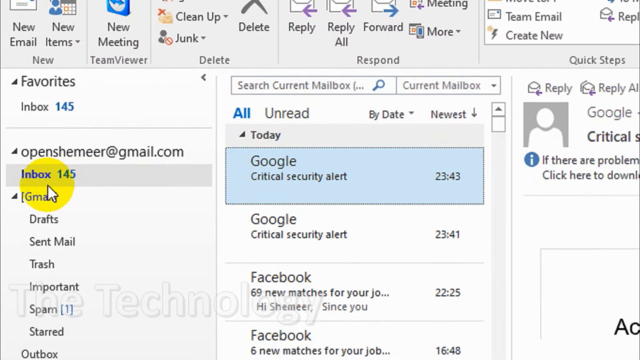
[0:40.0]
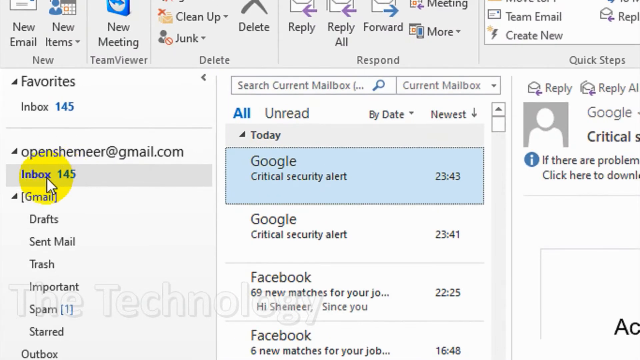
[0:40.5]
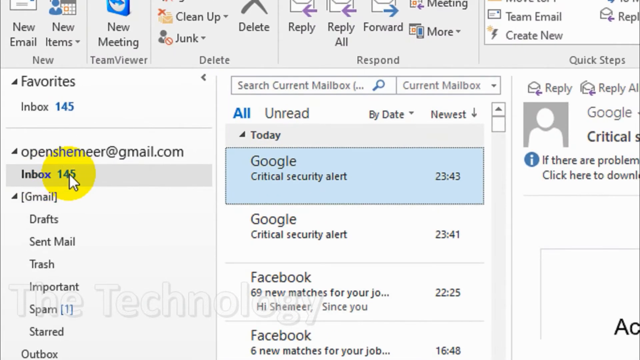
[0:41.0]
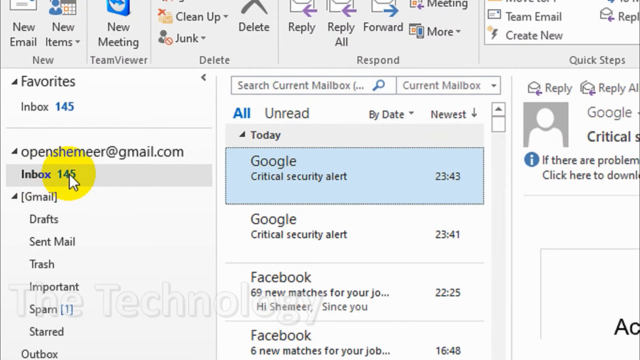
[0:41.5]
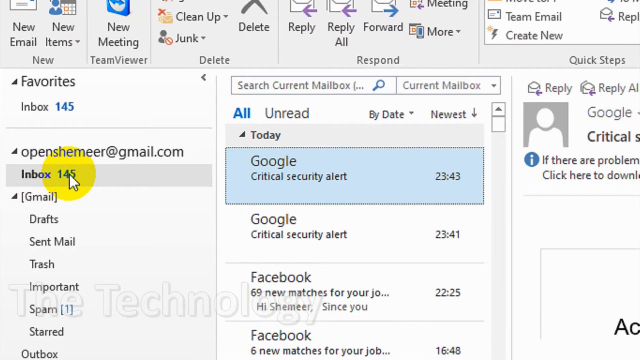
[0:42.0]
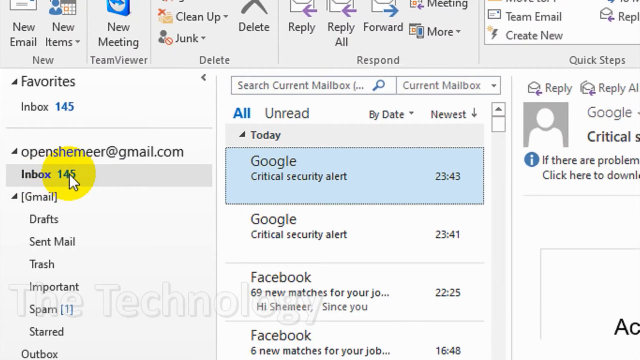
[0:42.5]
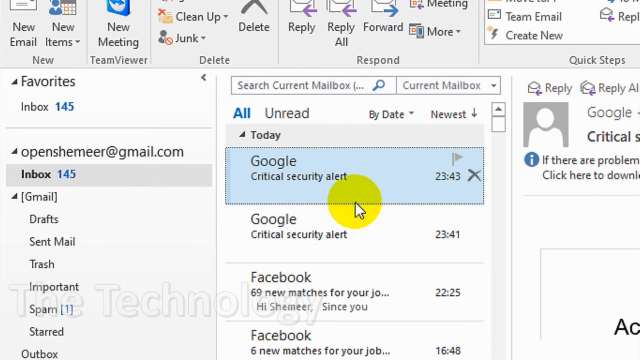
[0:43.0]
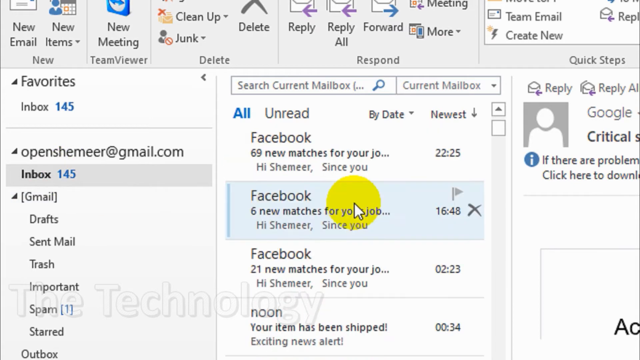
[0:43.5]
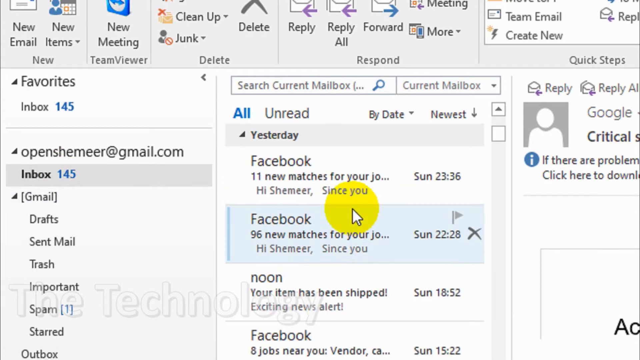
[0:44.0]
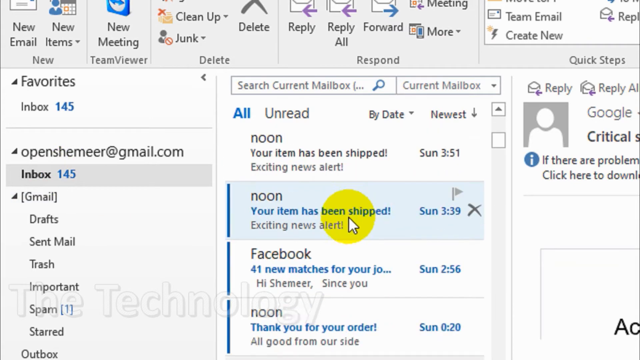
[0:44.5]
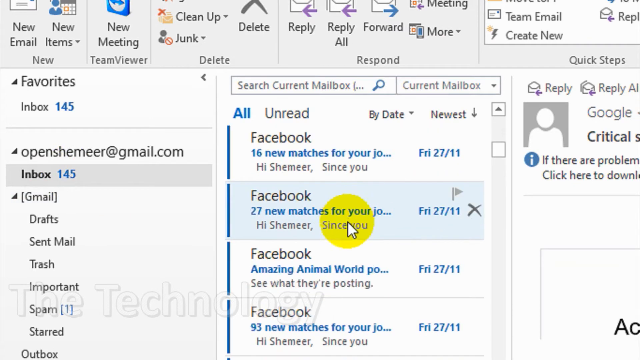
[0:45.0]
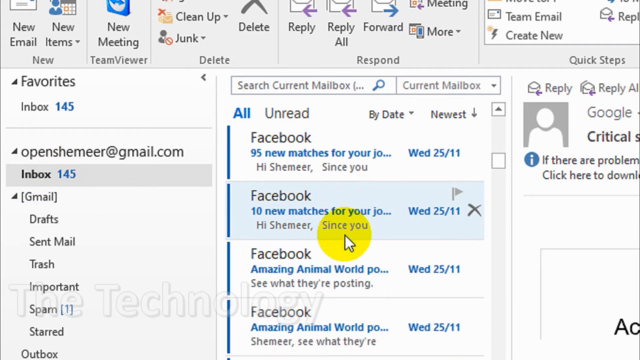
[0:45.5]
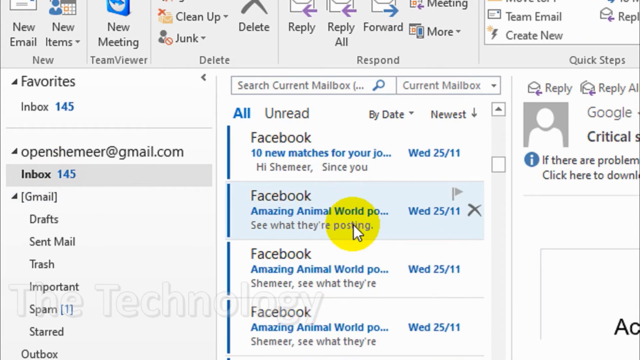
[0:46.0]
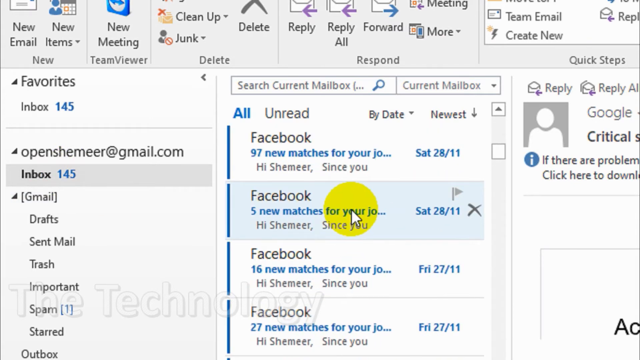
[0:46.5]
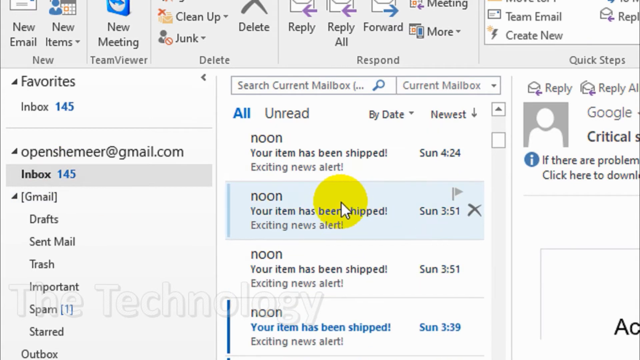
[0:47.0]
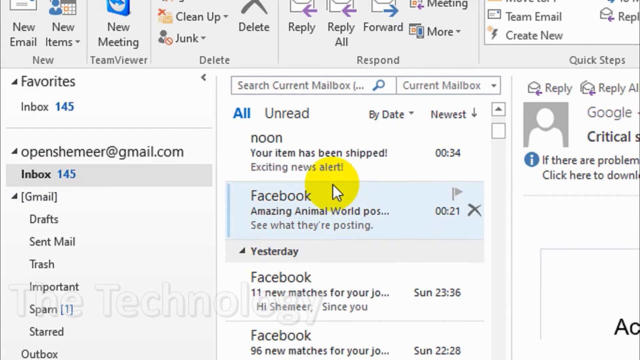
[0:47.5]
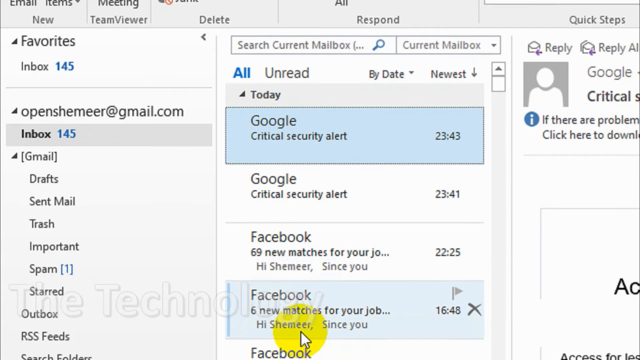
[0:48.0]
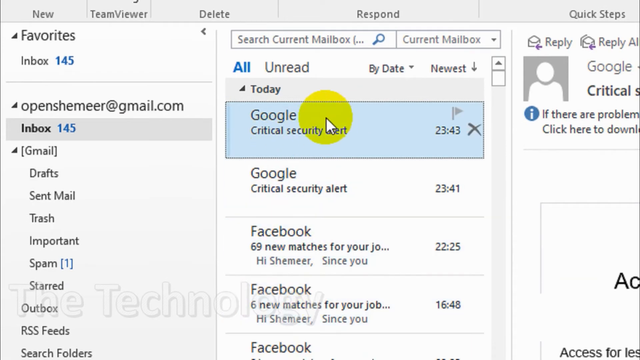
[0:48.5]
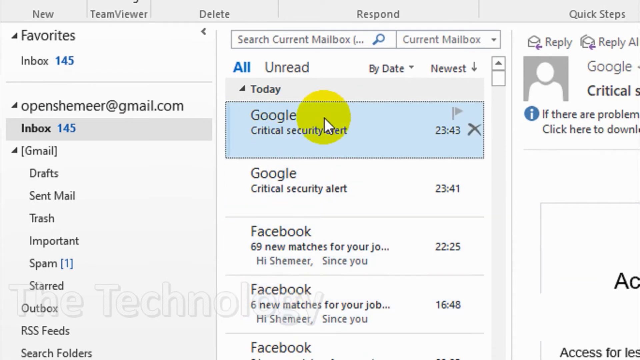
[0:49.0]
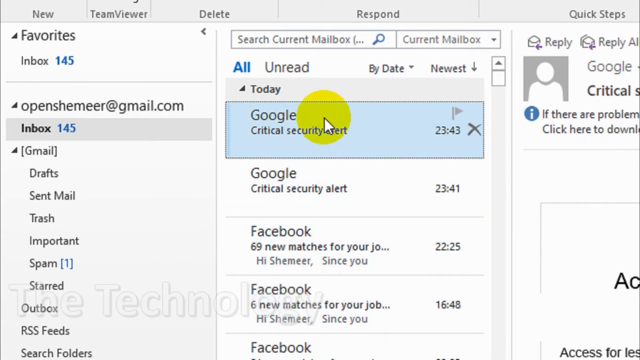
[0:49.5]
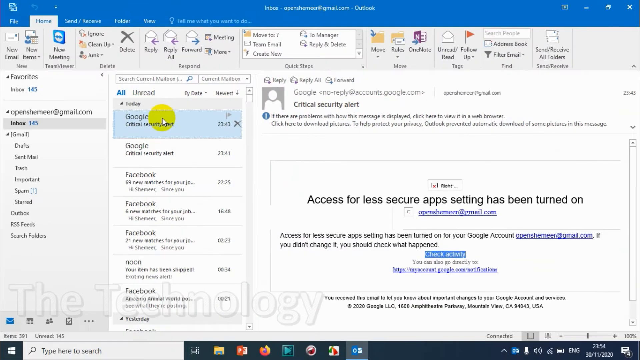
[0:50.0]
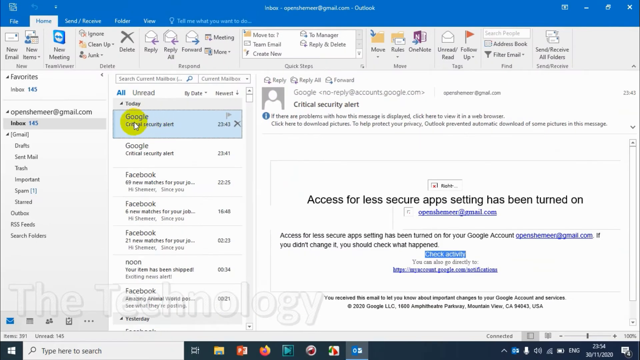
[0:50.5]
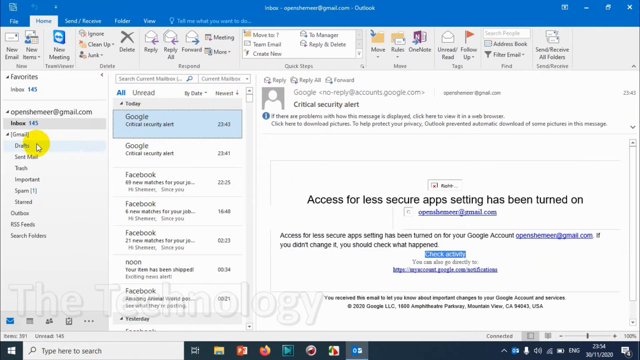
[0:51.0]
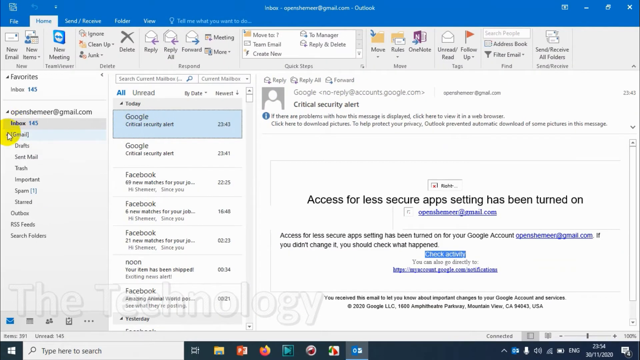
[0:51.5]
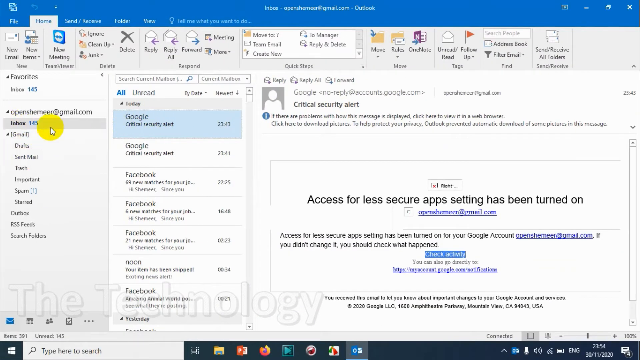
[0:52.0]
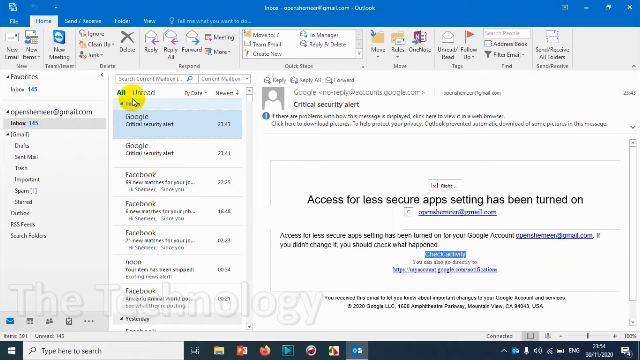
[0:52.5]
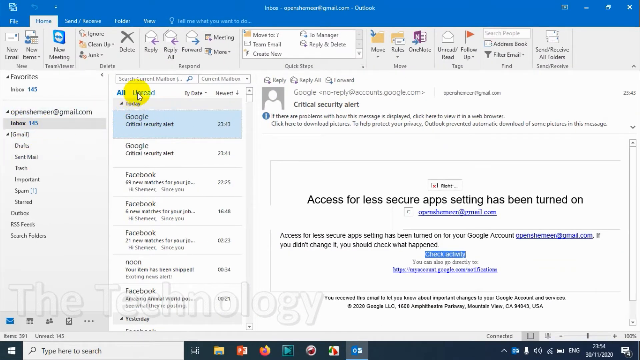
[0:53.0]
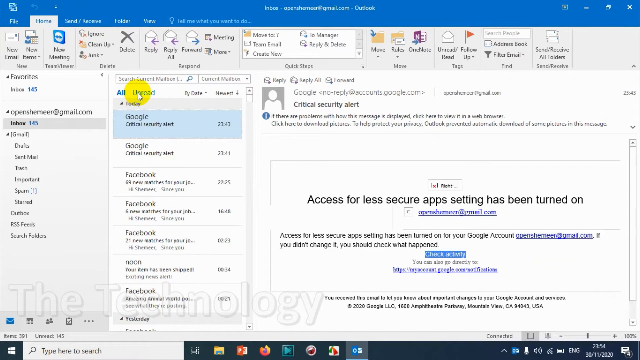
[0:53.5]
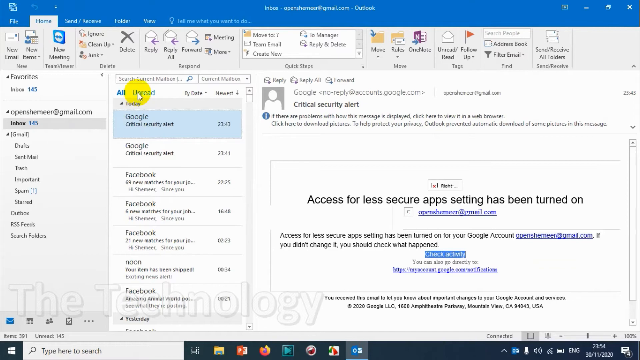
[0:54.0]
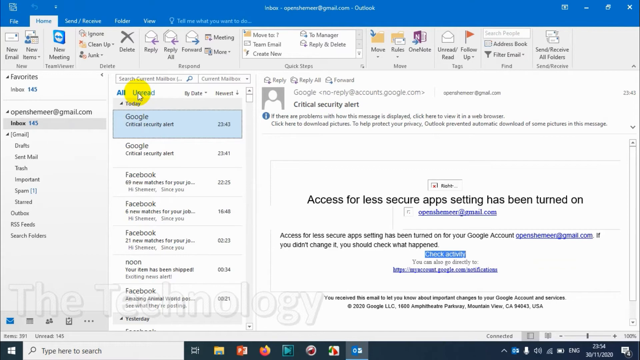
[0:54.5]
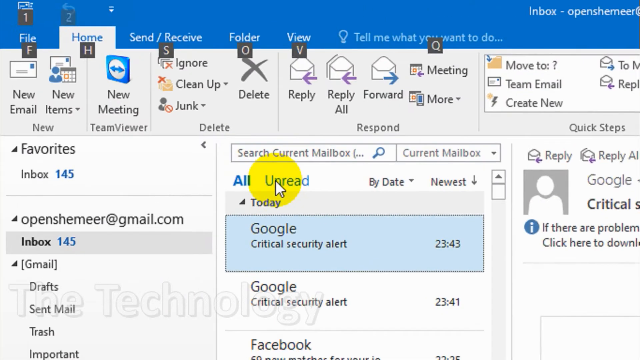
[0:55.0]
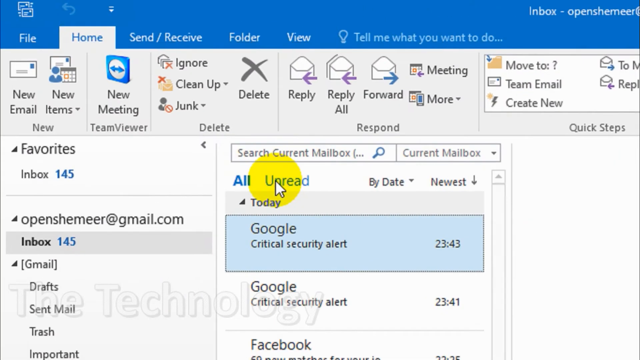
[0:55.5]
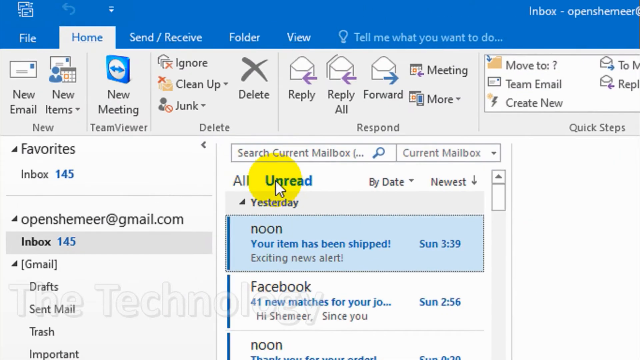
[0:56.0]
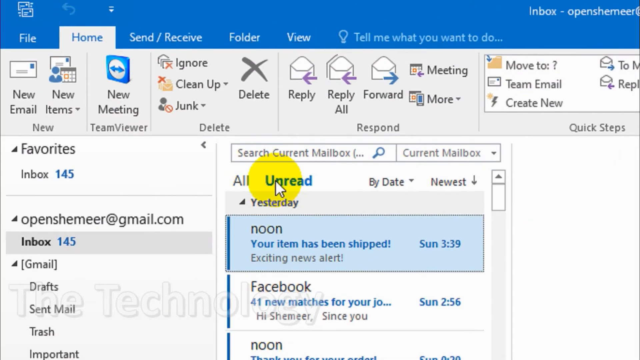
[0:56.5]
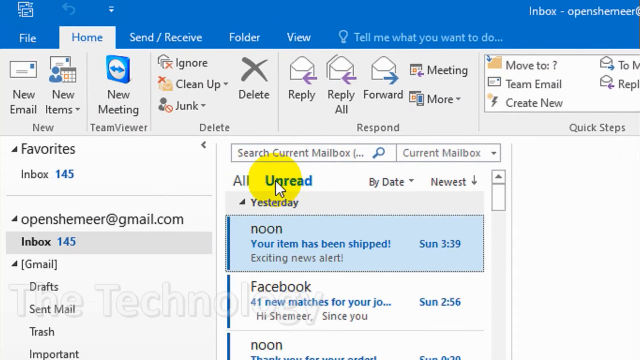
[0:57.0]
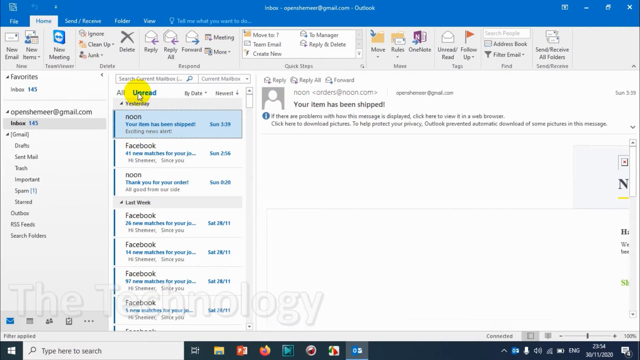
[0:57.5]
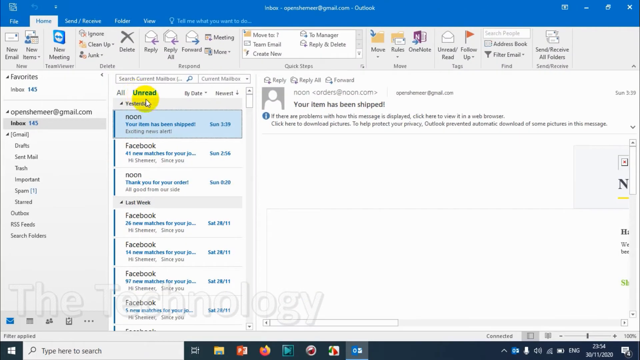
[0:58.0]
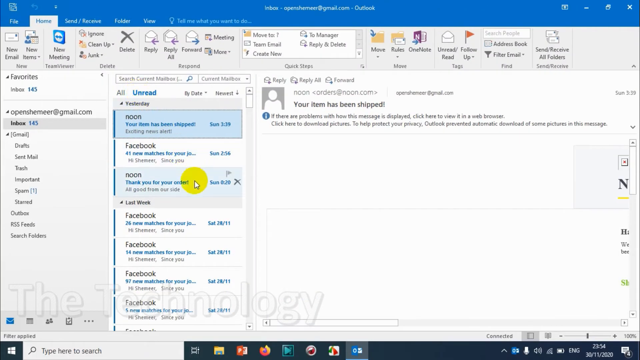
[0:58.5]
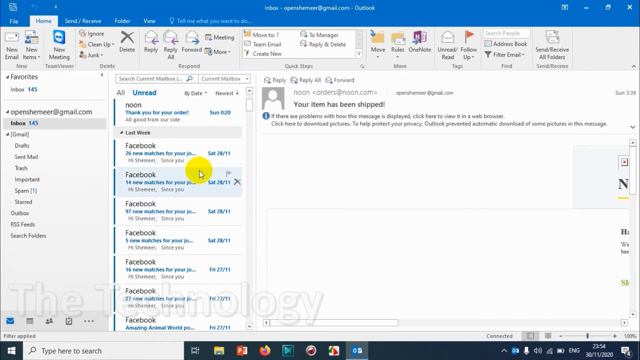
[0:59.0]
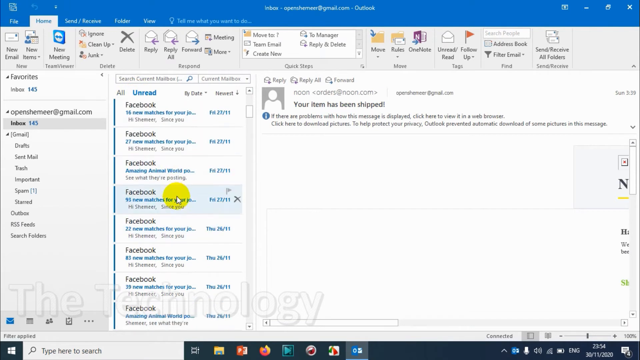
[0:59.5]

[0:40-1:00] A page appears to be an Outlook application landing page. Icons at the top read "New Email," "New Items," "New Meeting," "Clean Up," "Jump," "Delete," "Reply," "Reply All," and "Forward," followed by two smaller icons reading "Meeting" and "More." Something is open that reads "Team Email" and "Create New." Below it, a small section reads "Favorites" with "Inbox." Below that is a Gmail address with the sections "Inbox," "Gmail," "Drafts," "Sent Mail," "Trash," "Important," and "Spam." To the right is what looks like an email account with the emails; the first two read "Google, Critical Security Alert" and the third reads "Facebook." Further right, an open section looks like a snippet of one of the emails. A yellow pointer is placed on the inbox, scrolls up and down through the emails, scrolls back up, and lands on the first email. As the screen maximizes, the pointer circles around. It goes to unread and scrolls through the messages again, and finally rests on the inbox.